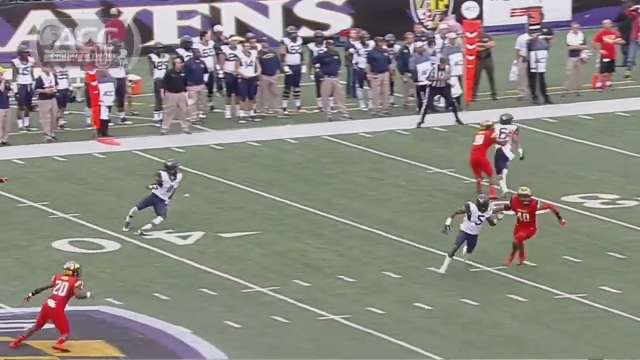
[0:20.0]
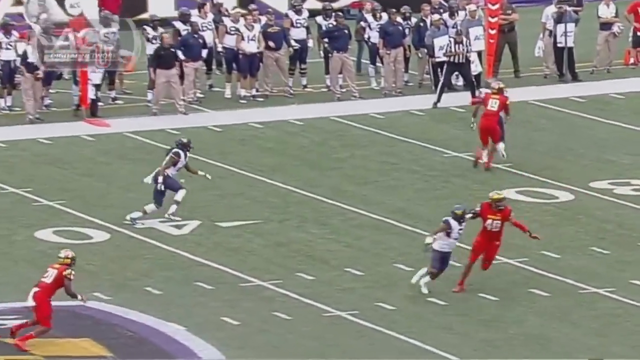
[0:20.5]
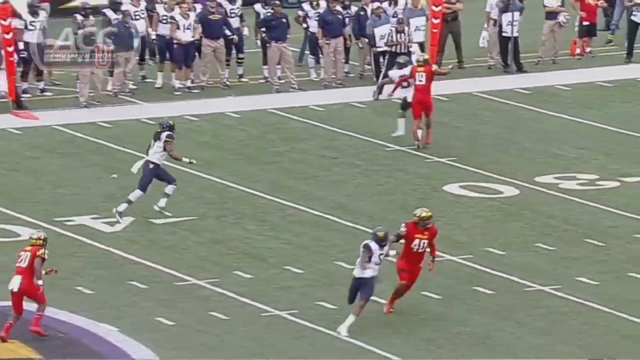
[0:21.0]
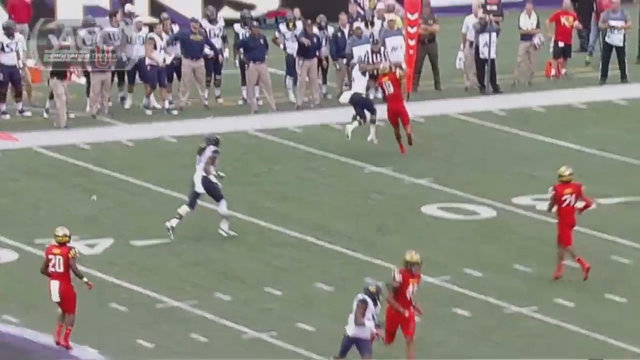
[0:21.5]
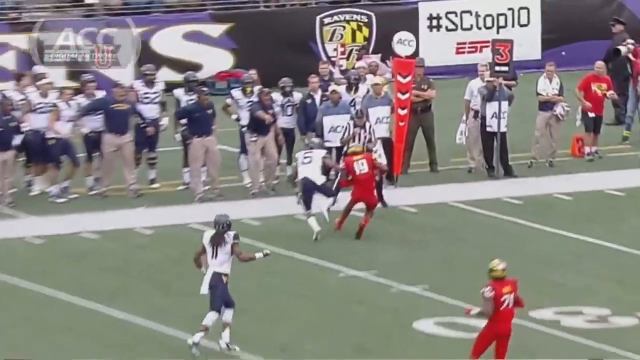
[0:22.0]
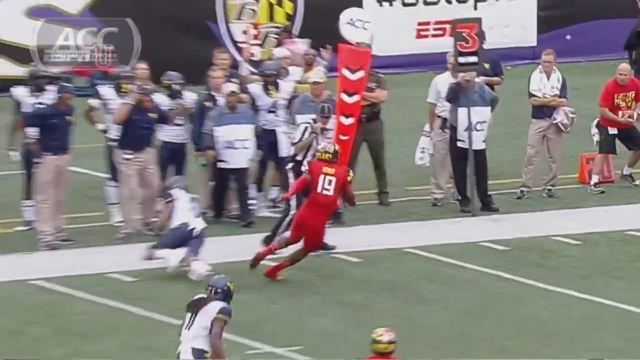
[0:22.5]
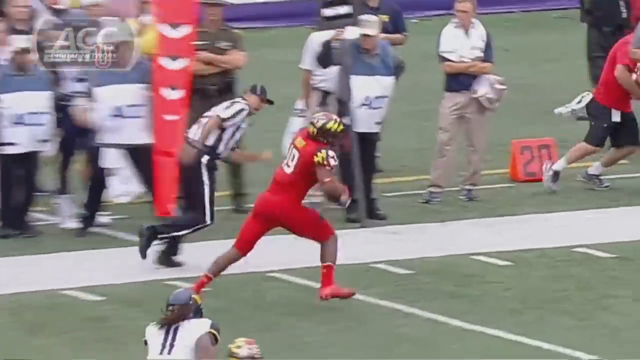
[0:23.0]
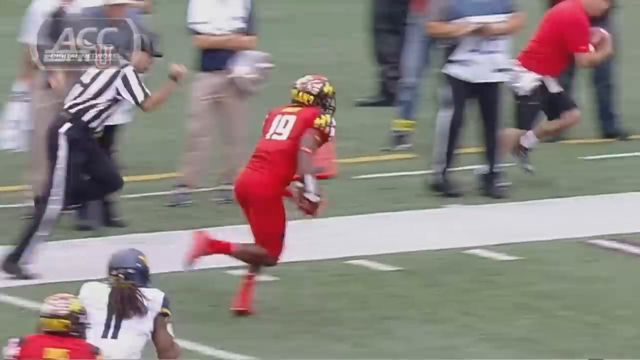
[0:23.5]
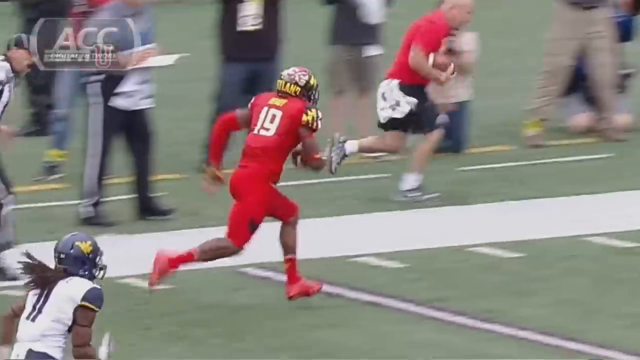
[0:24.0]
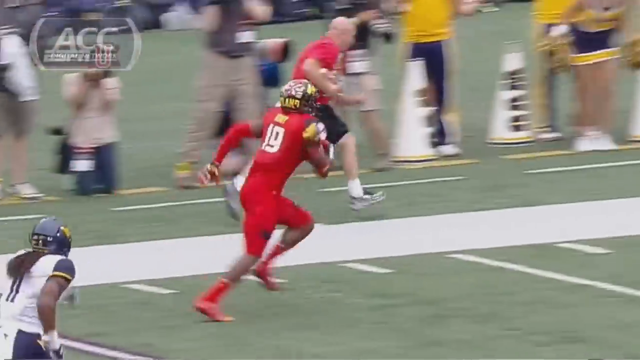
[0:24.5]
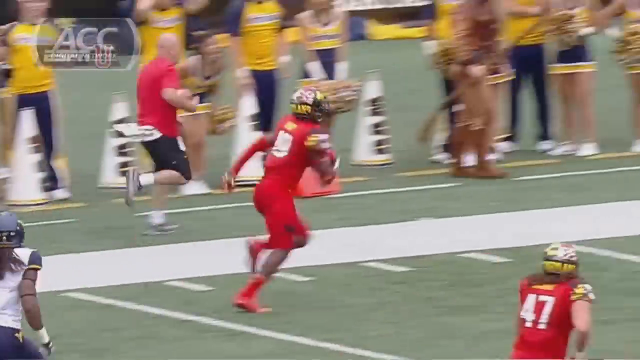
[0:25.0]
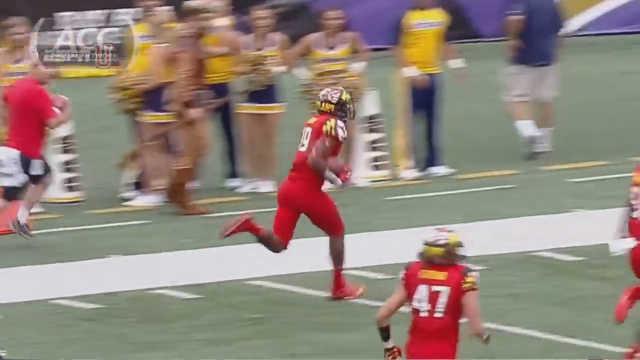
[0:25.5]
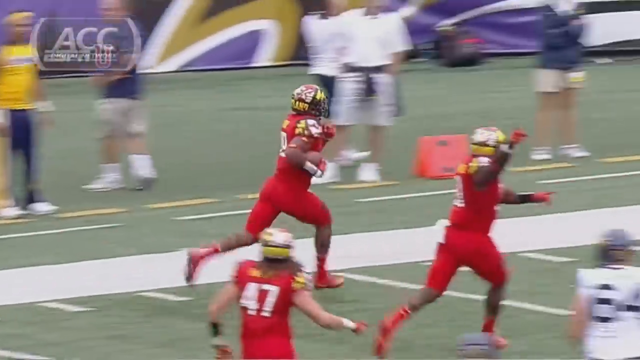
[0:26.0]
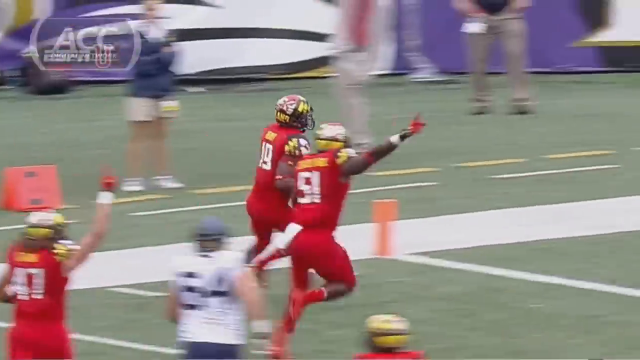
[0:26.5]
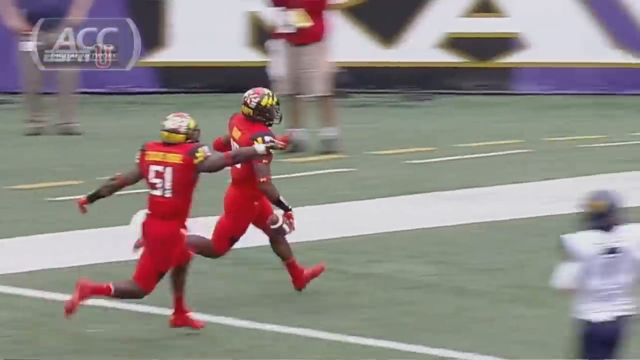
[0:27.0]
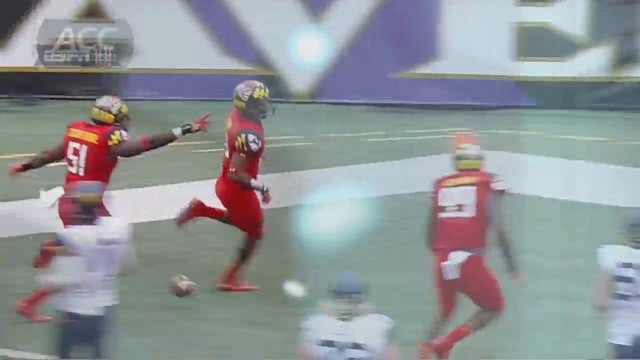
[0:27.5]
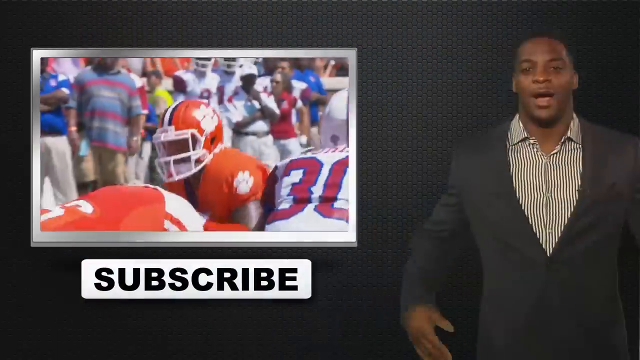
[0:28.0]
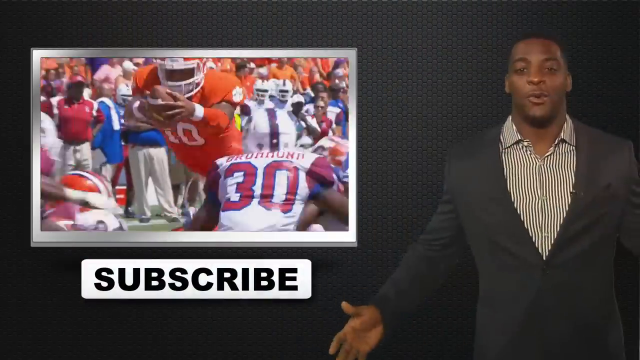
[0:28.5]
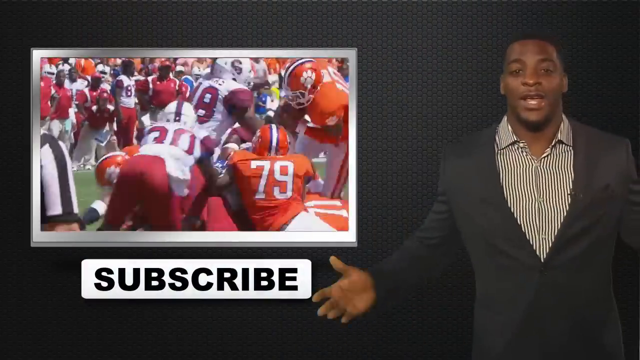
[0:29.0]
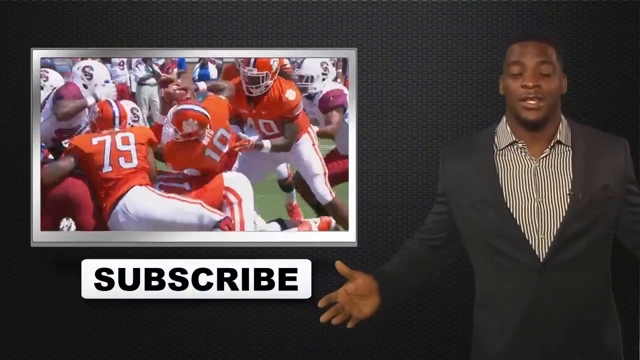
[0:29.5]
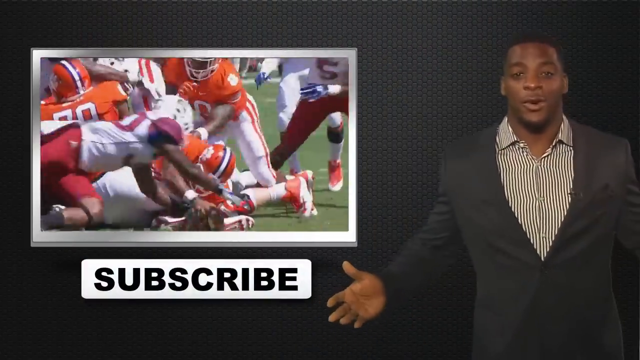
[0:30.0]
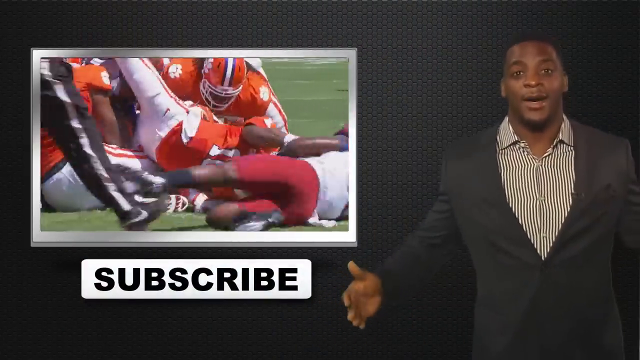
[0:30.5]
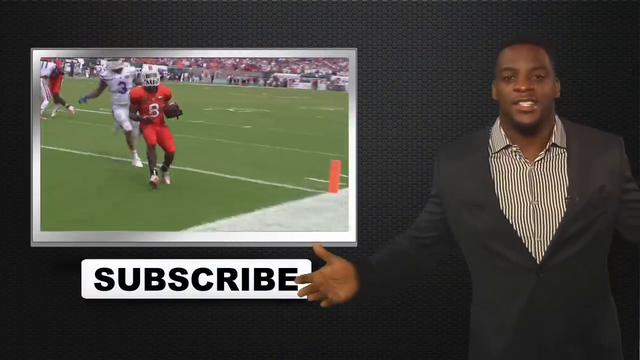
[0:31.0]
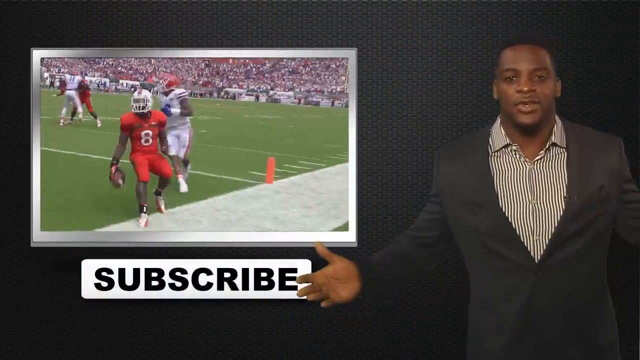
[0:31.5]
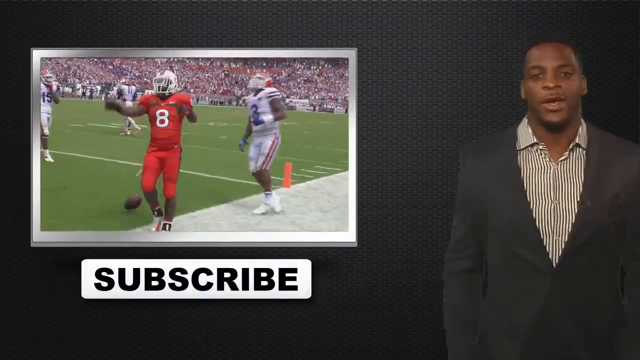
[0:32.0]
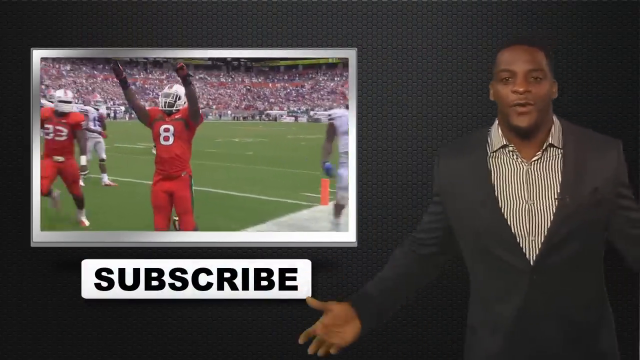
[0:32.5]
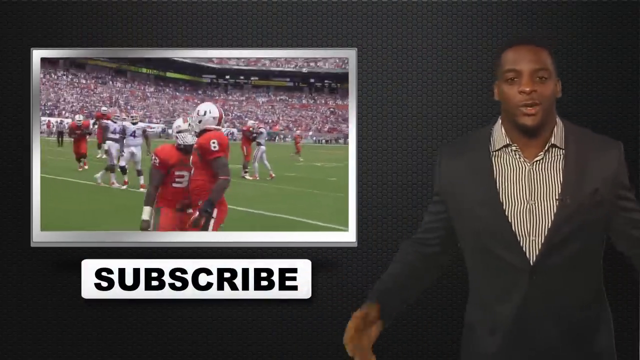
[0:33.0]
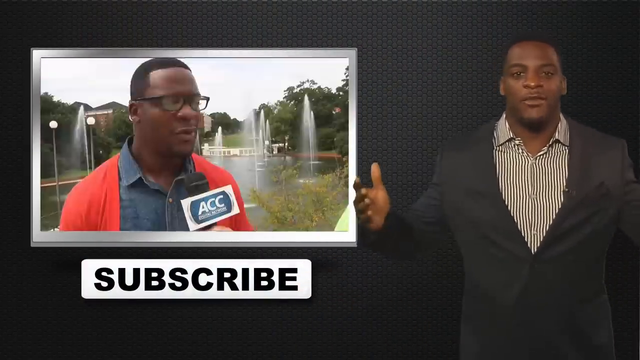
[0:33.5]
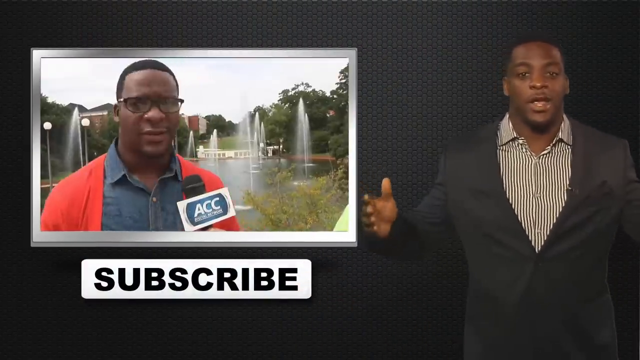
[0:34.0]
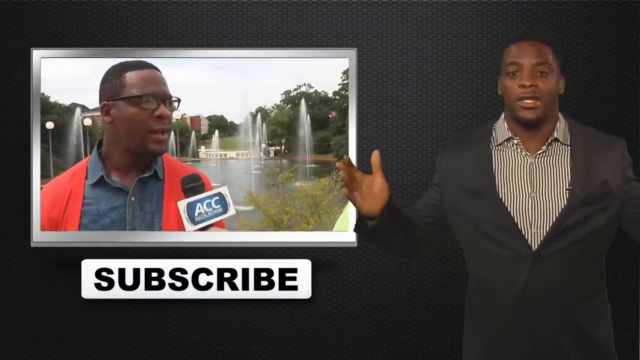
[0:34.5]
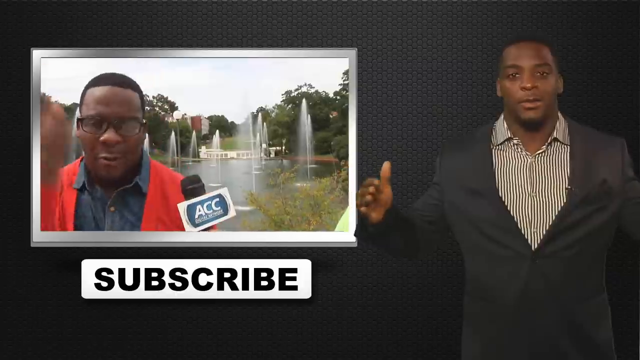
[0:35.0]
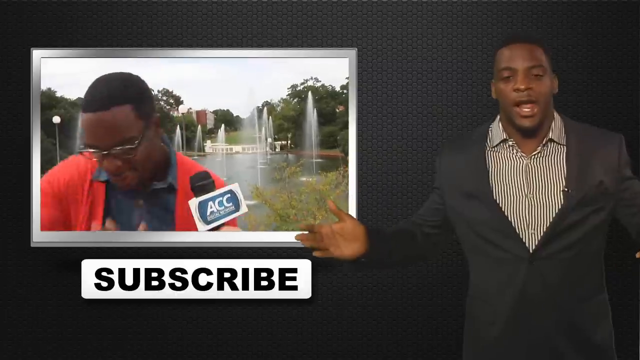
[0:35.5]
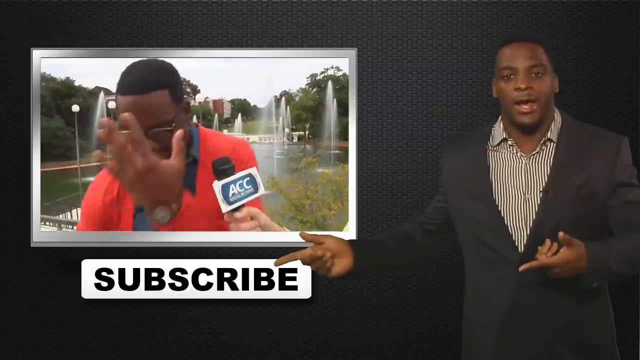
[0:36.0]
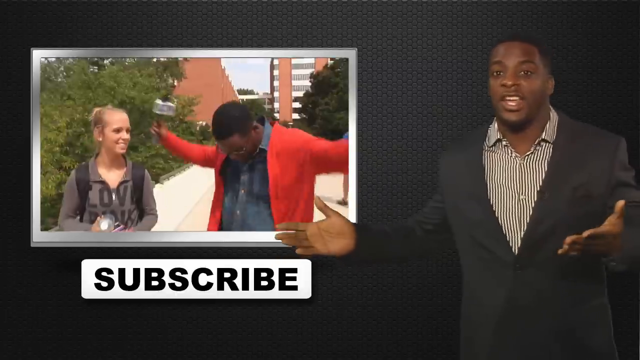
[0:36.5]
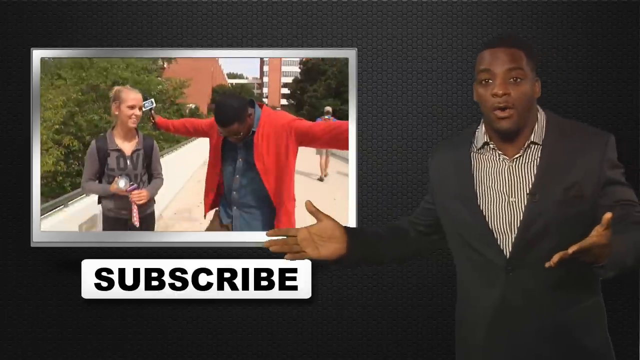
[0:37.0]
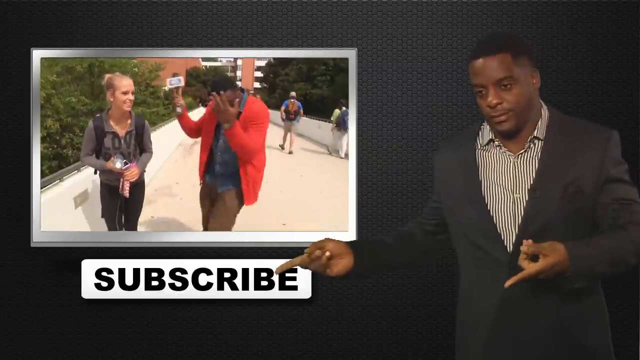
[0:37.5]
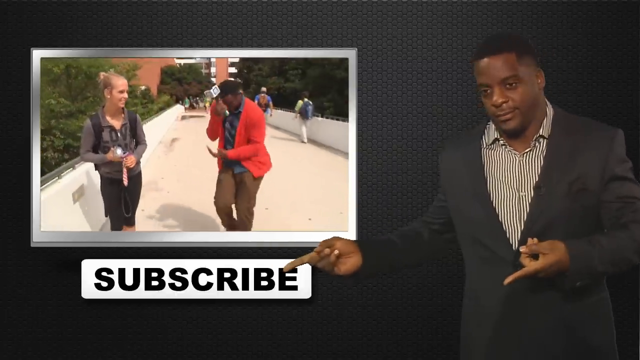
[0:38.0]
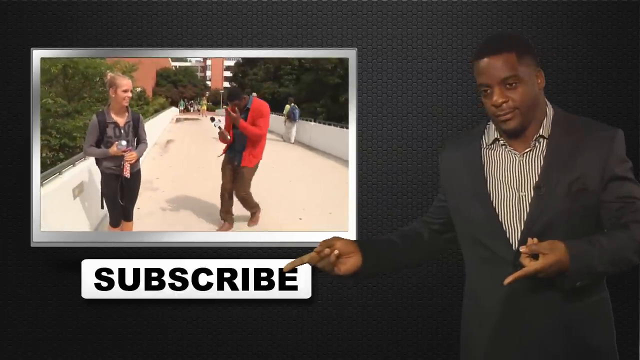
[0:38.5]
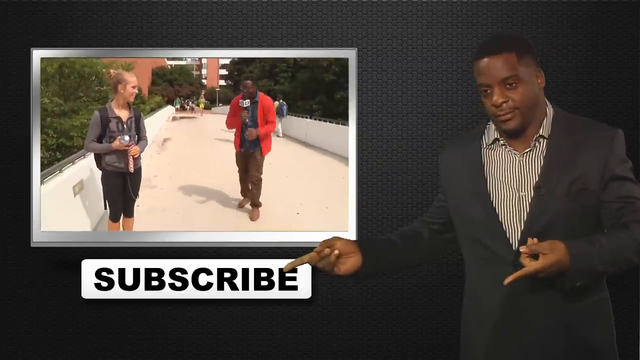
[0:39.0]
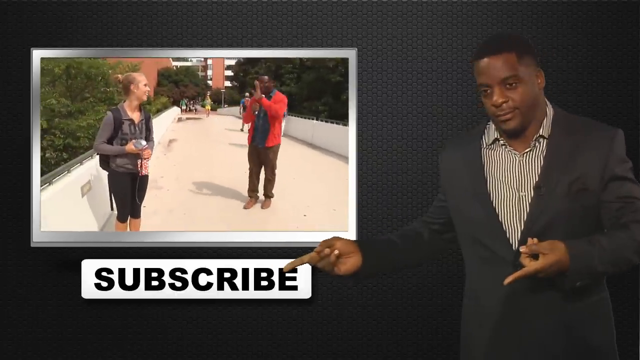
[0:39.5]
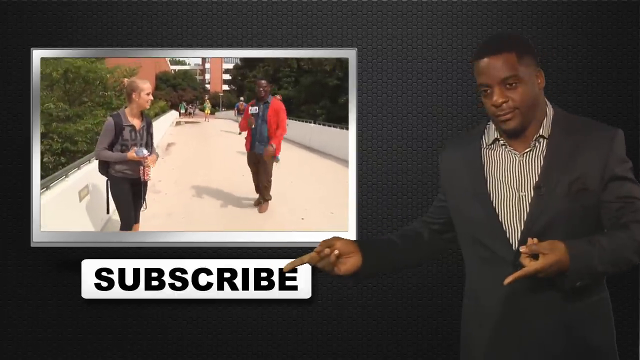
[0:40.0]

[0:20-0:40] A replay shows Maryland making a touchdown, apparently on third and 12. A man appears who seems to be describing the video. He is then shown doing what looks like a dance in an interview, and then he interviews a girl in what looks like workout wear. He wears a red jacket with a blue shirt and brown pants, and the man describing the video is in a suit with a shirt. The setting is still the same place with the same fans, and referees are visible. It looks like the Ravens stadium. Maryland is in red, and the other team is in white and blue. They catch a pass at about the 30-yard line. It is the ACC network.